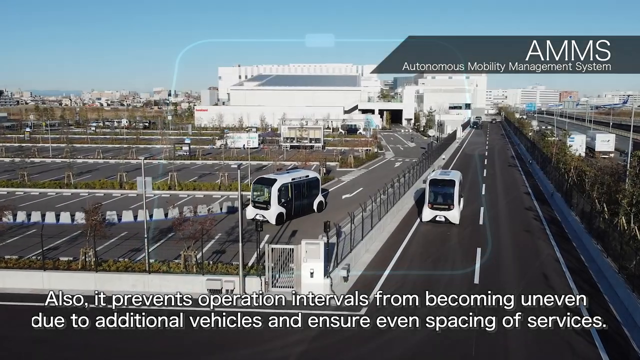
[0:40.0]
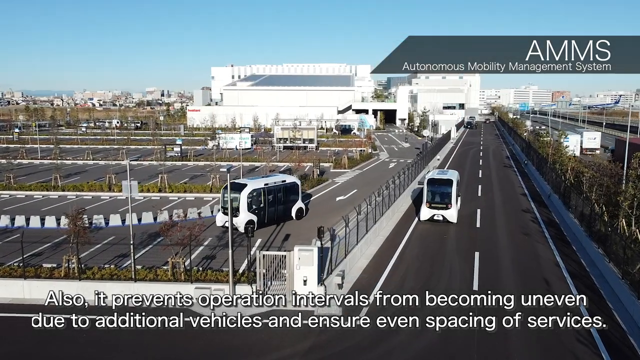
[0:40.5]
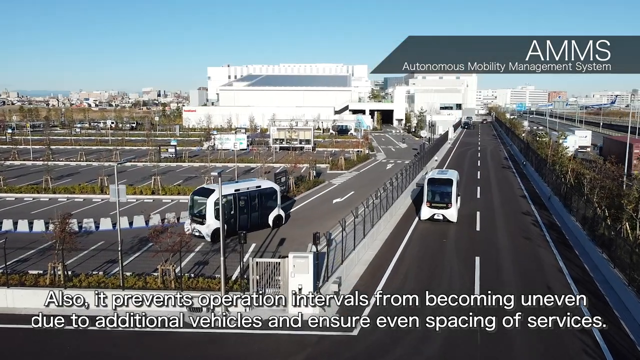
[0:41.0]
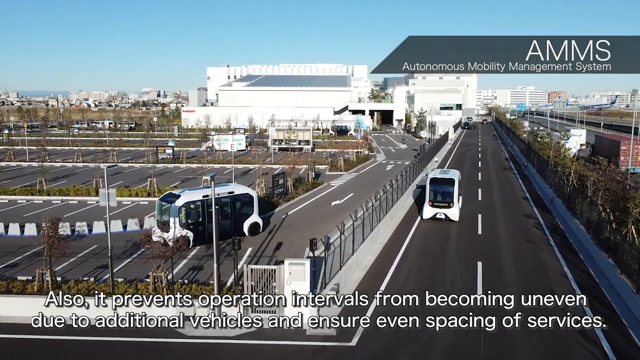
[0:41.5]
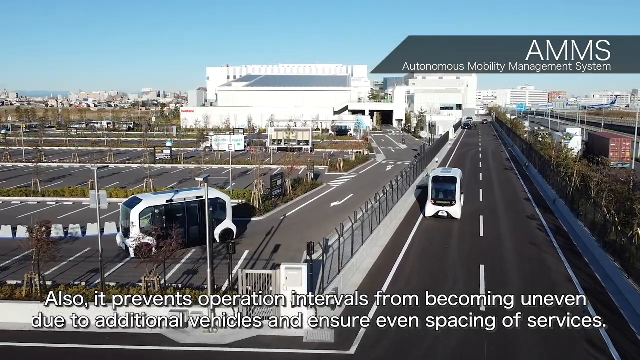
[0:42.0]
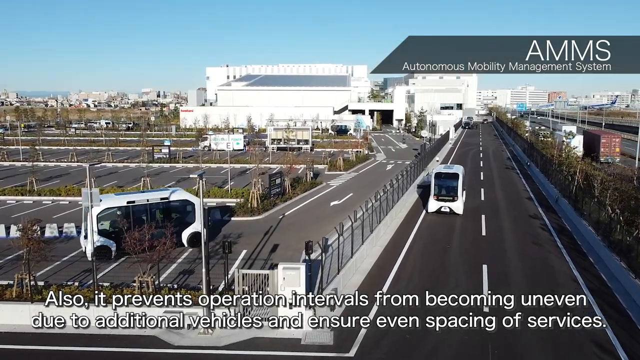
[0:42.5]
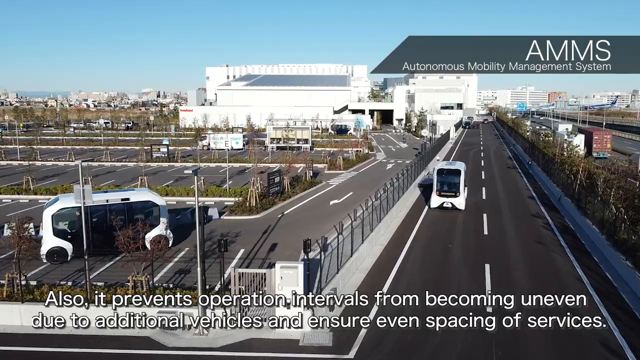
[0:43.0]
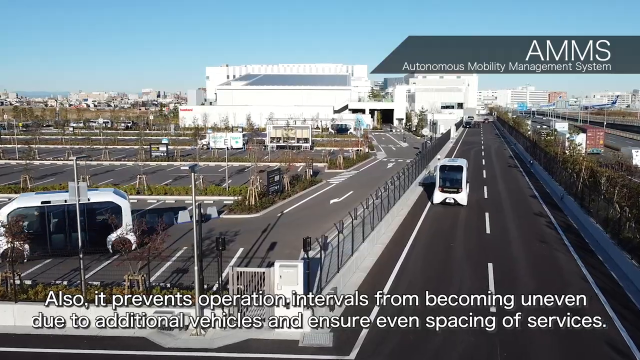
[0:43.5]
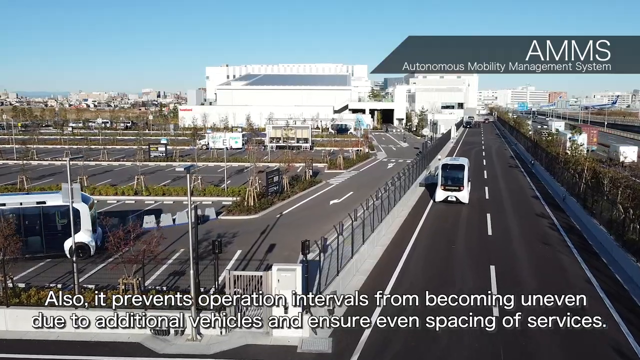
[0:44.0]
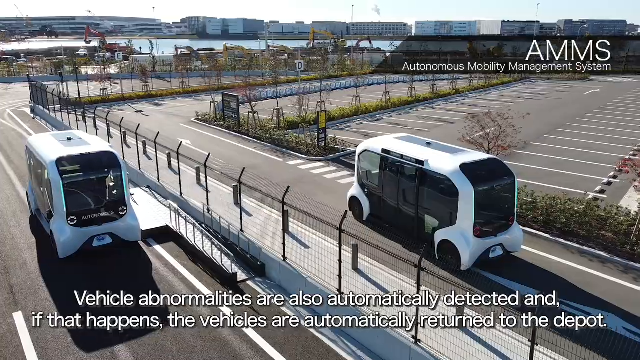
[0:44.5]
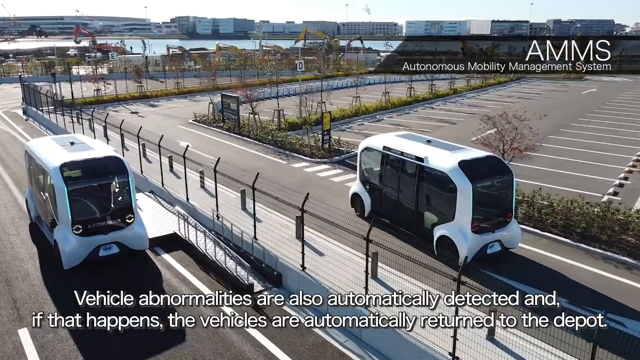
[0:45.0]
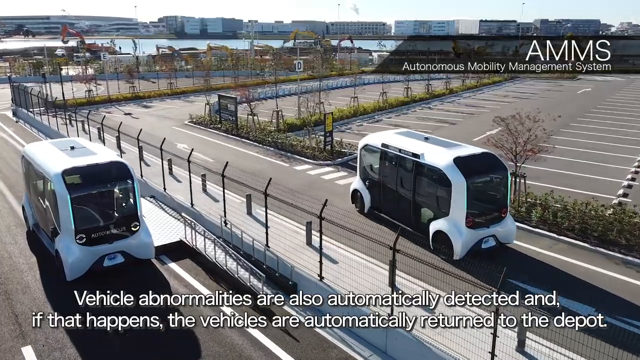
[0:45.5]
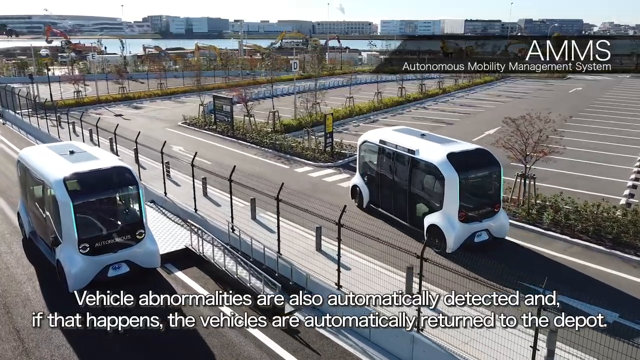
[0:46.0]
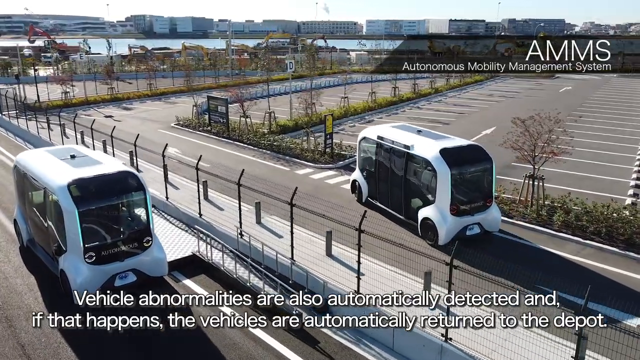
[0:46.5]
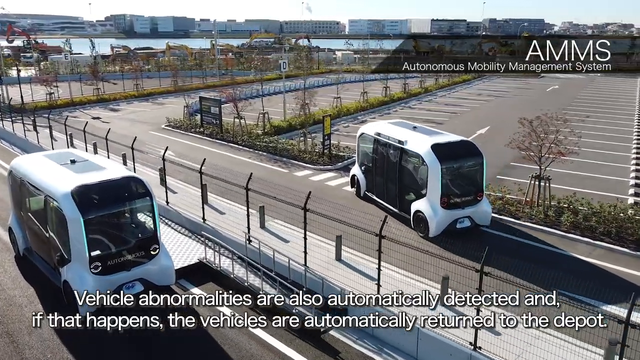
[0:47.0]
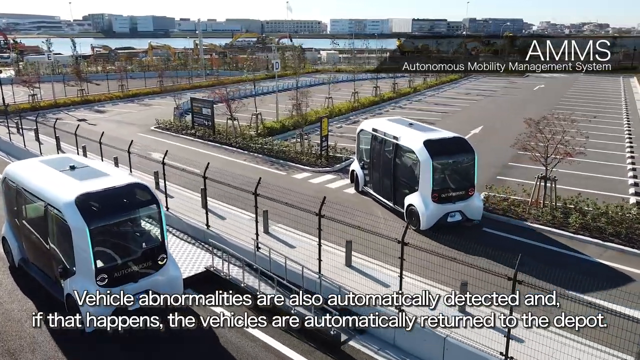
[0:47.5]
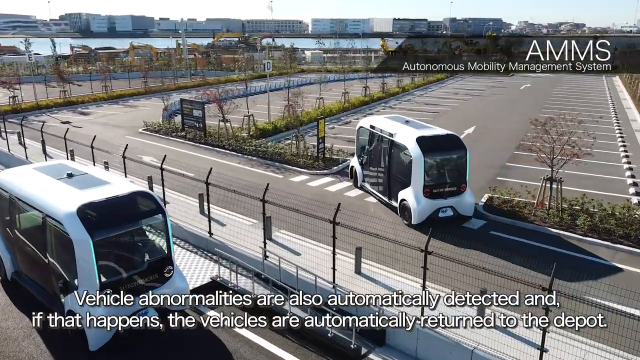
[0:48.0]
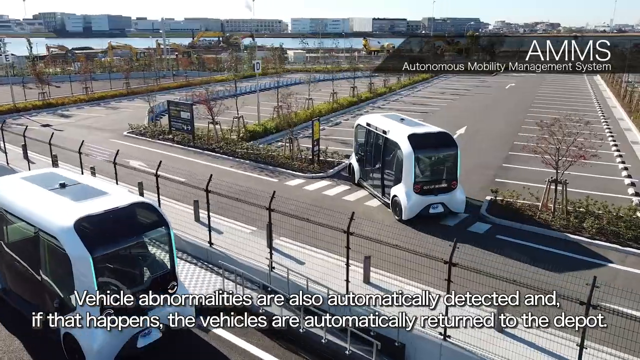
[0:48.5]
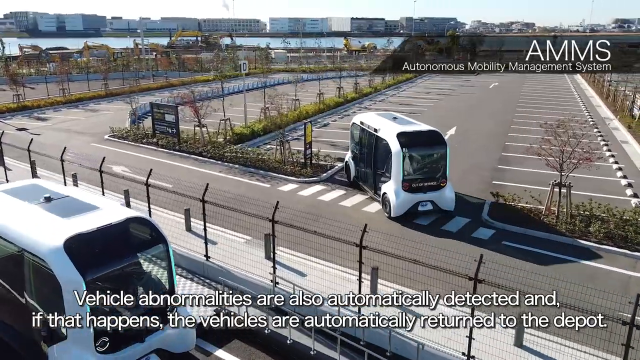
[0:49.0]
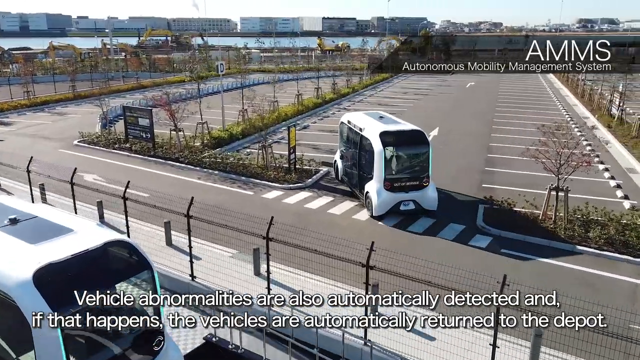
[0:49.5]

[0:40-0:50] The buses drive in different parts of the parking lot and on the roadway next to it. To the right of the facility is another roadway with different box trucks driving down it, and other city buildings are in the distance. A caption mentions that the vehicle is tracked for abnormalities and that when one occurs, vehicles are automatically returned to check on the problem. A bus turning into this section of the parking lot has "out of service" on the back. The text in the video is white and bordered in black.